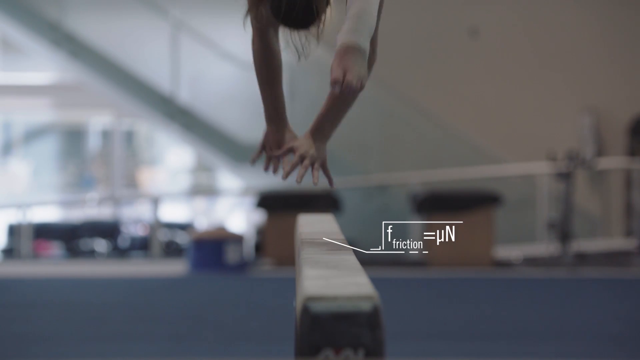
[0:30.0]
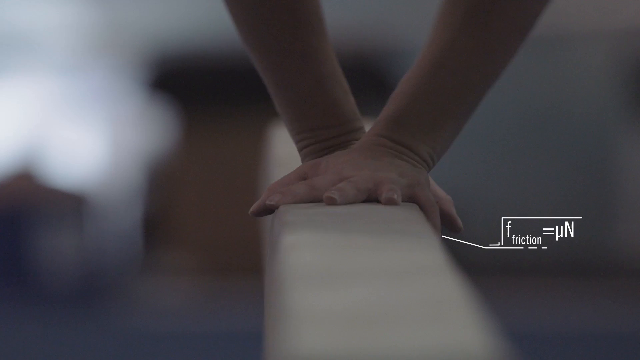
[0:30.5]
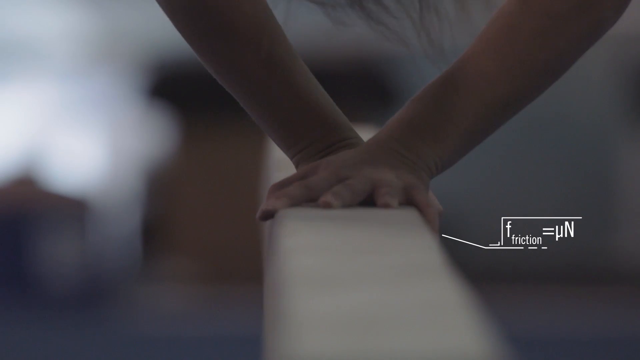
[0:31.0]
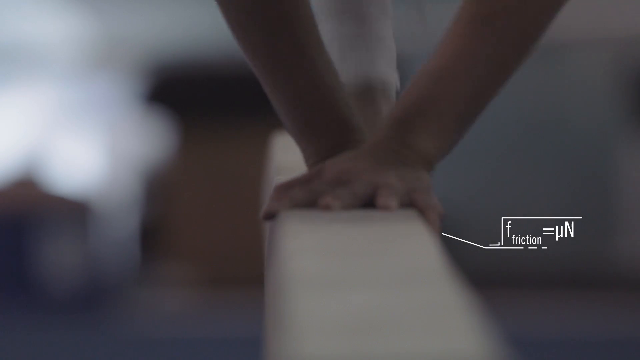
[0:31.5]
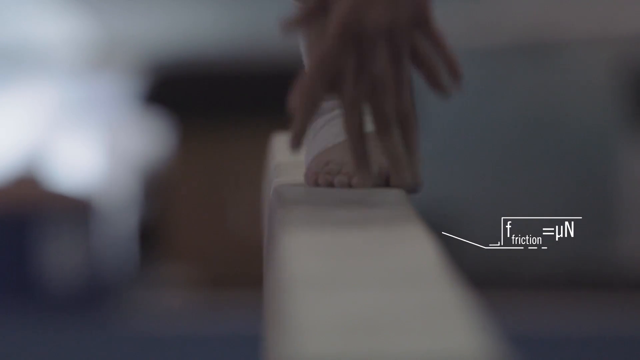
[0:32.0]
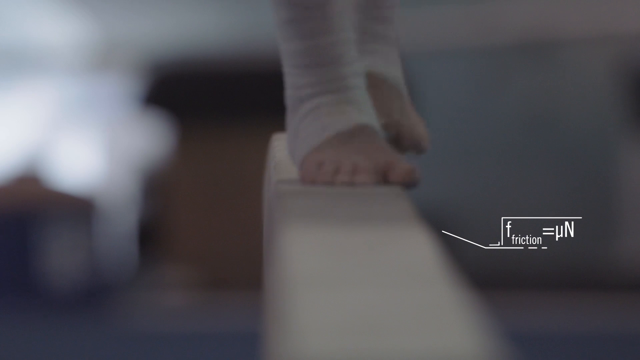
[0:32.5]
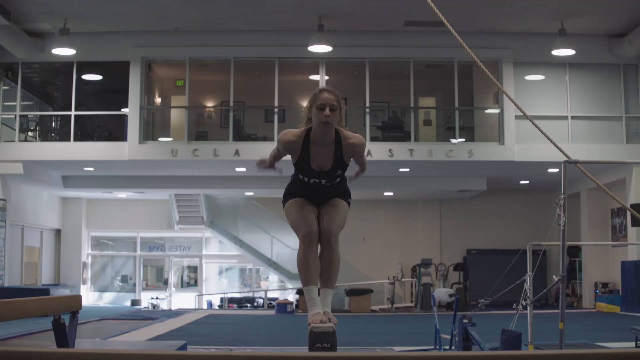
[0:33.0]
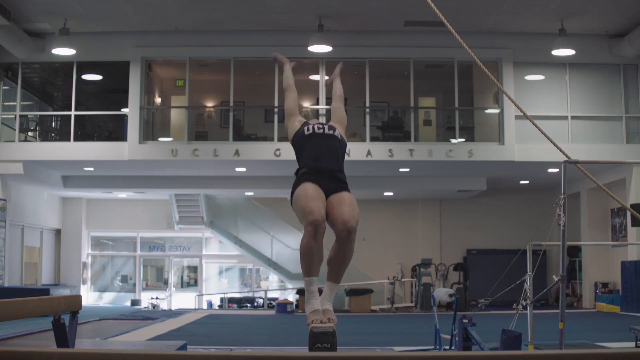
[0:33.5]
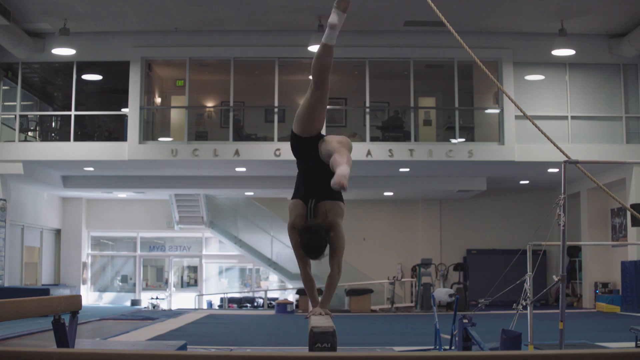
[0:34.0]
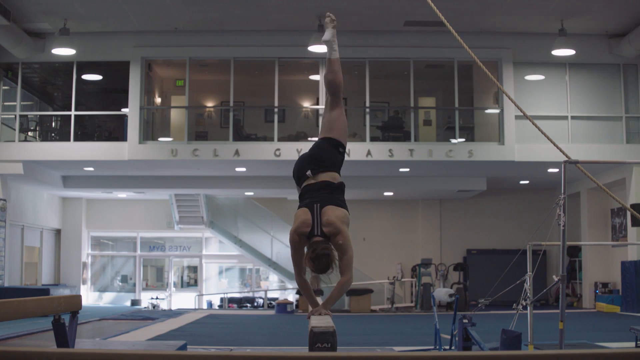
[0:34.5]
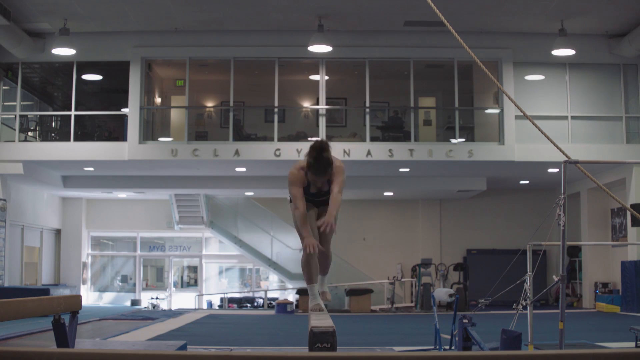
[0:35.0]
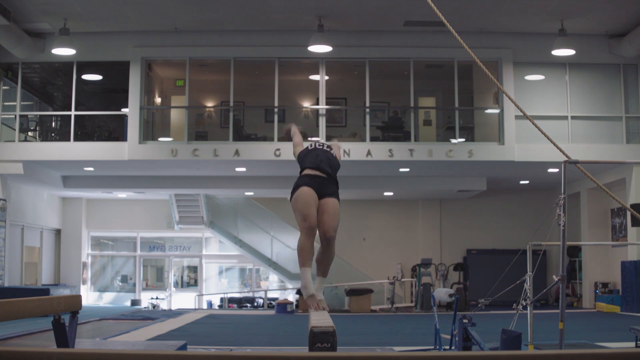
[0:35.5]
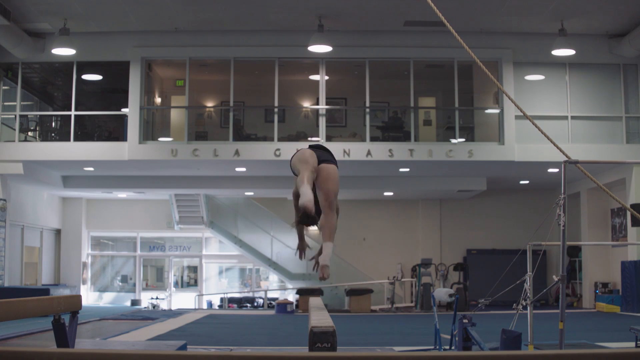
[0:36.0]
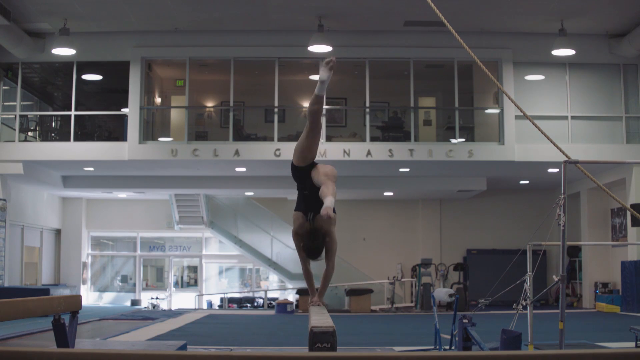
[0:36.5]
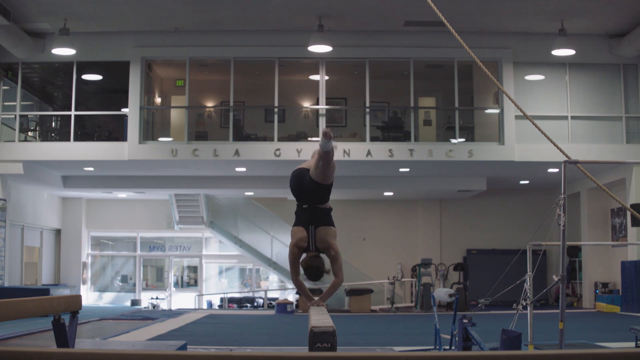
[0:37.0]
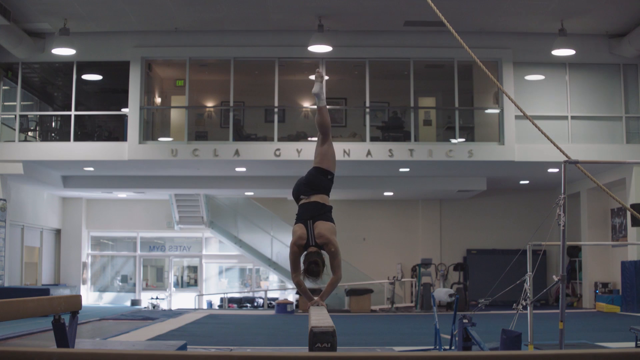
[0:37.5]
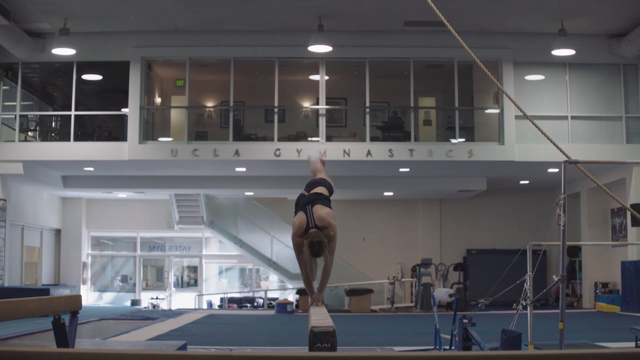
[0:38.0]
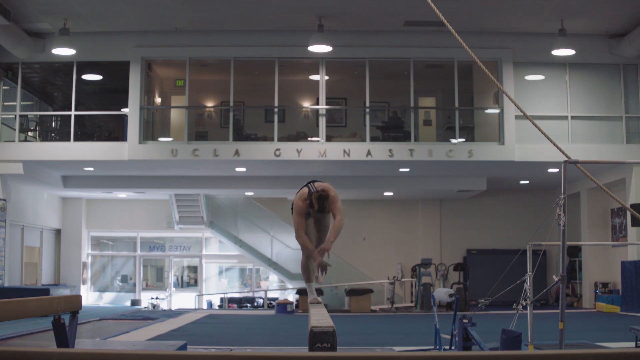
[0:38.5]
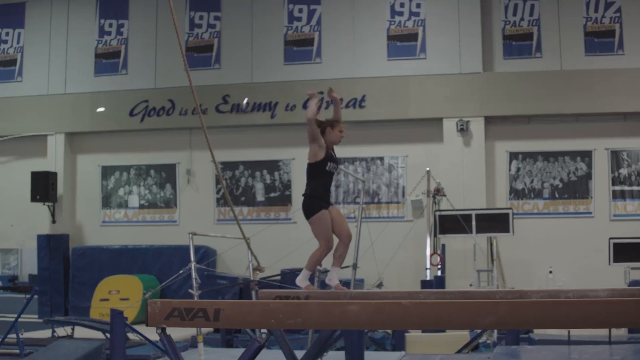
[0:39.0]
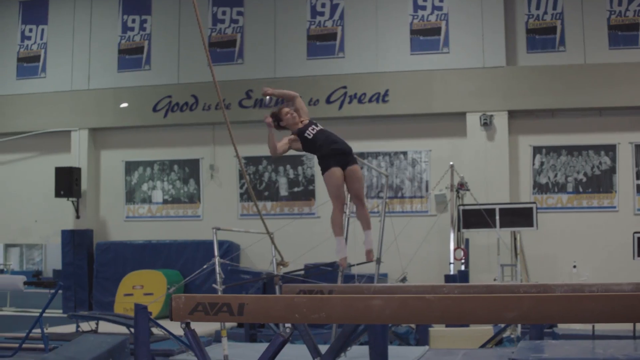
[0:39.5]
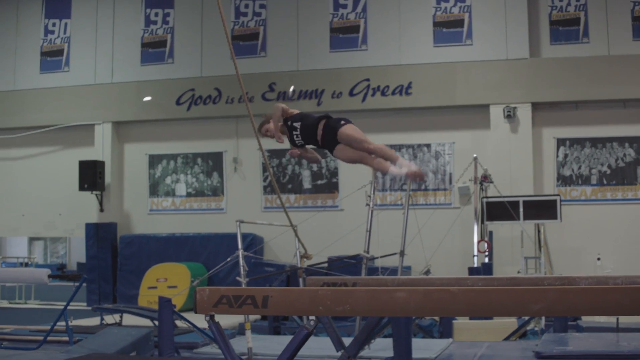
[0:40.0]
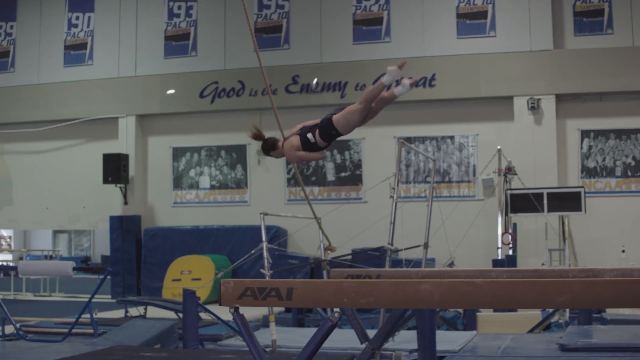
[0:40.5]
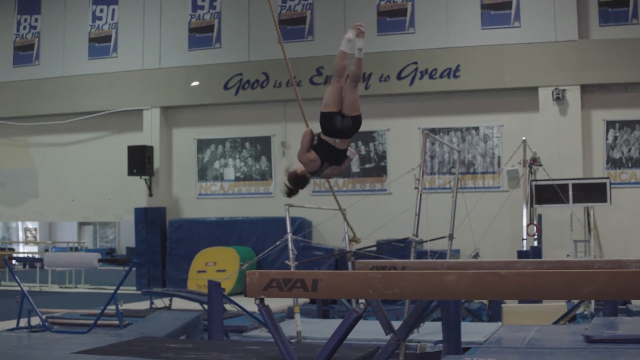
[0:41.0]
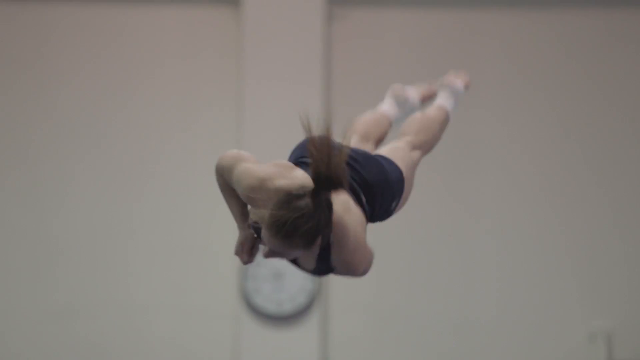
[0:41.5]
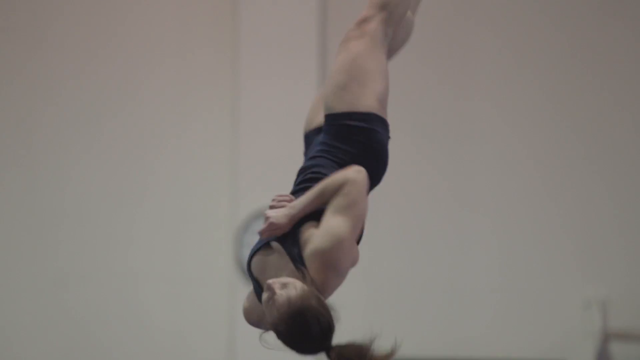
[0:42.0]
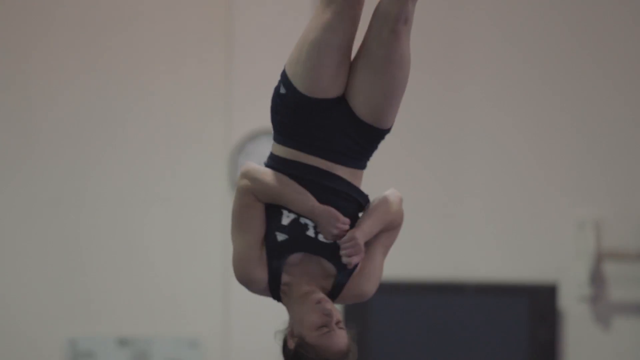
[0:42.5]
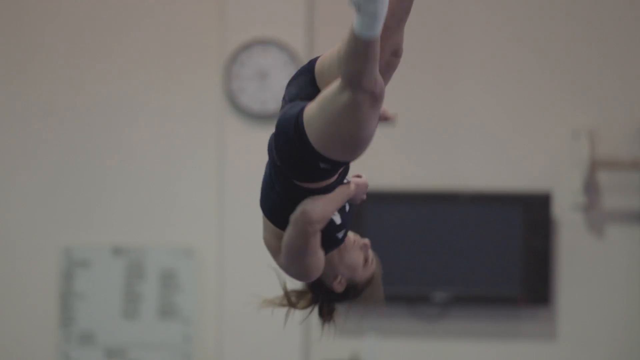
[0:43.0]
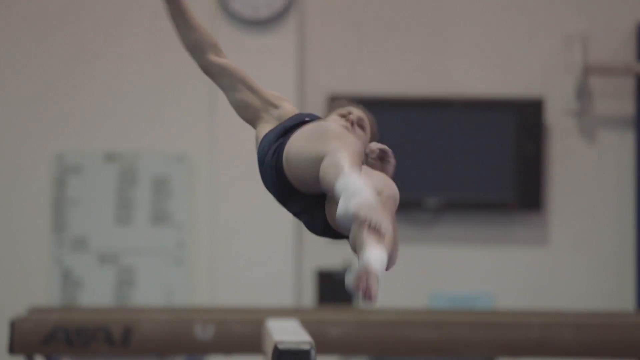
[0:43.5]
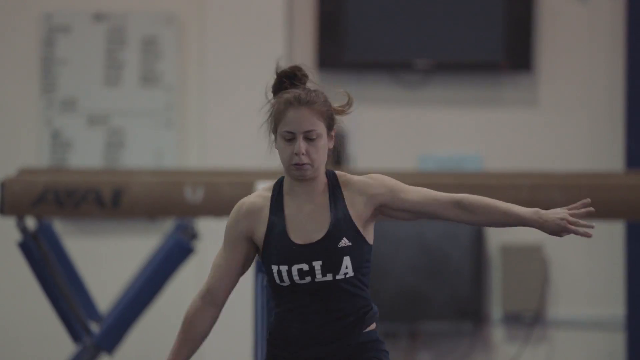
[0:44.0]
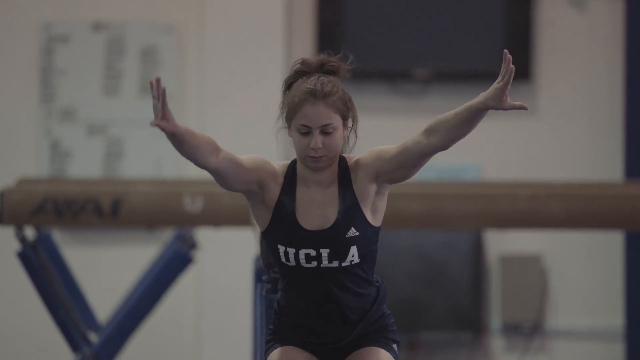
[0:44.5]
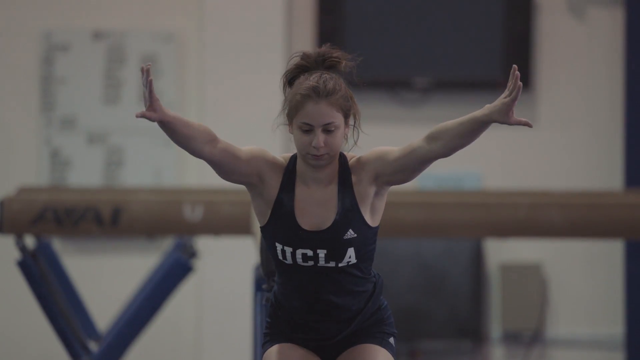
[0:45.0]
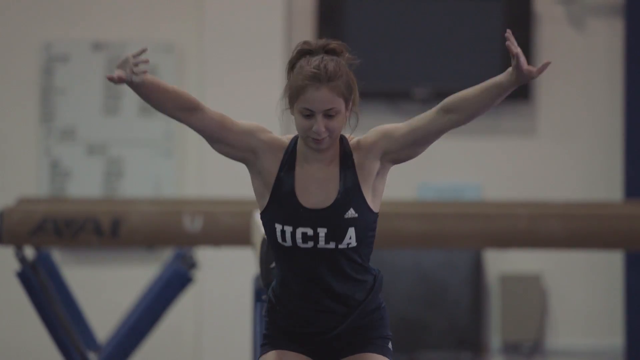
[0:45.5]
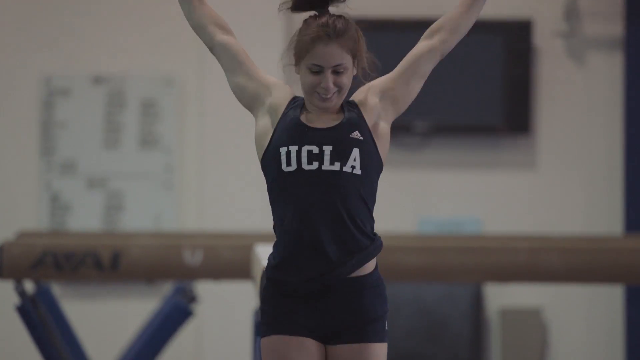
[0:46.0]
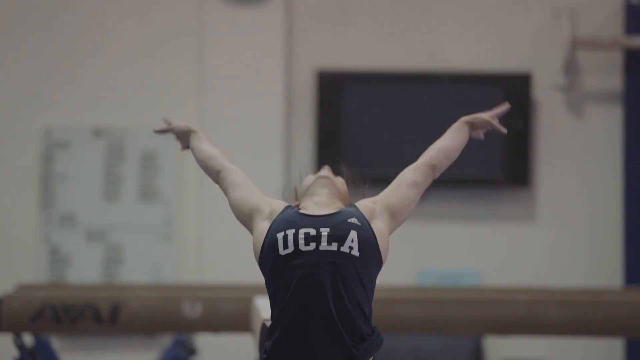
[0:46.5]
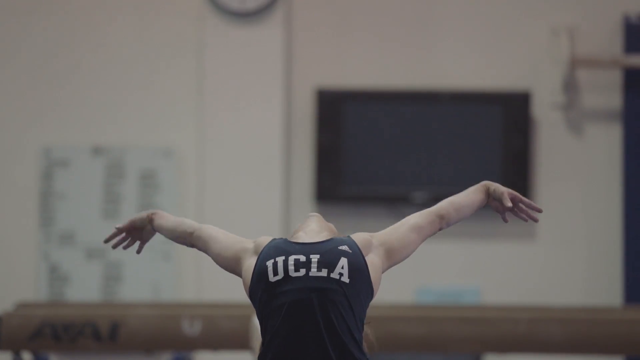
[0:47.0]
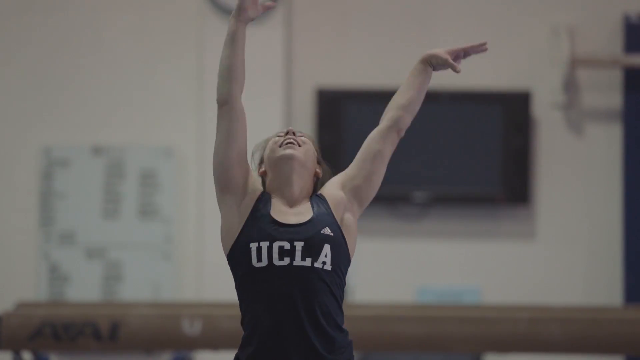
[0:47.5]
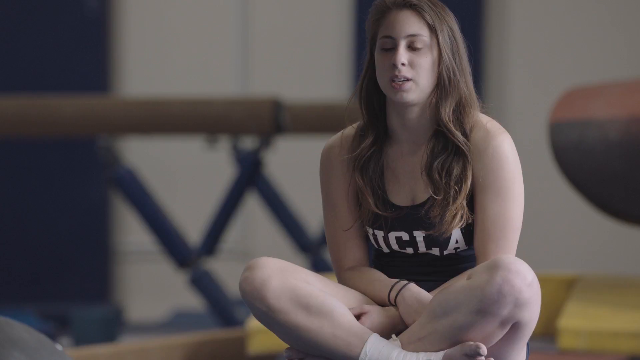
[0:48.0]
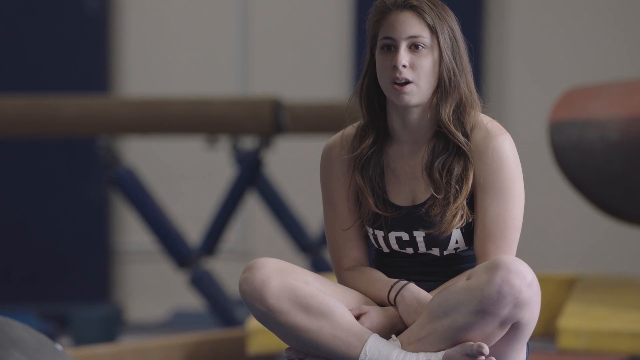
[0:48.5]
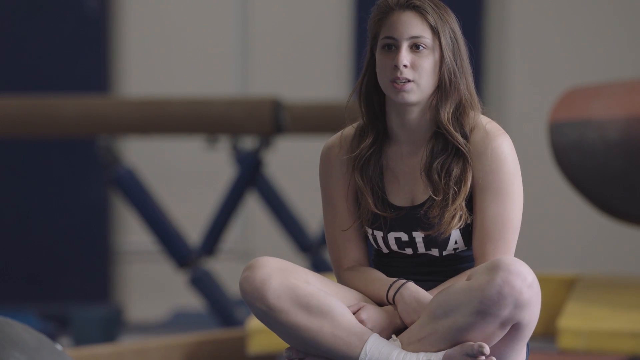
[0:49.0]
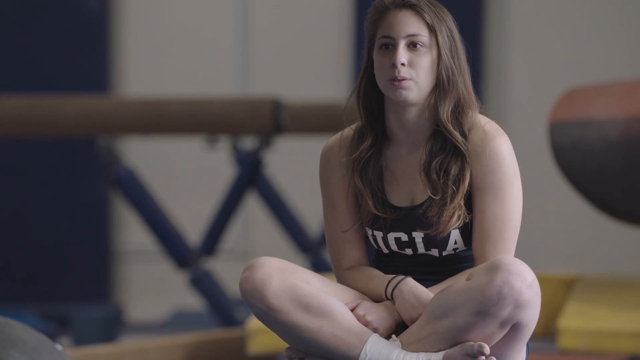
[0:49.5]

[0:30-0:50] In slow motion, she comes out of a backflip. The view looks directly down the balance beam, then zooms back. She does another backflip and catches herself, then a second backflip and catches herself. On a third backflip she kind of twists around several times, then lands on the mat, catches herself and composes herself with knees bent. She straightens her legs and raises her arms above her, back extended, with a big smile on her face. Next she is sitting on the mat with her legs crossed, speaking into the camera. Graphics appear during the jumps and twists showing how fast she was, how much power she was generating, and the friction taking place.